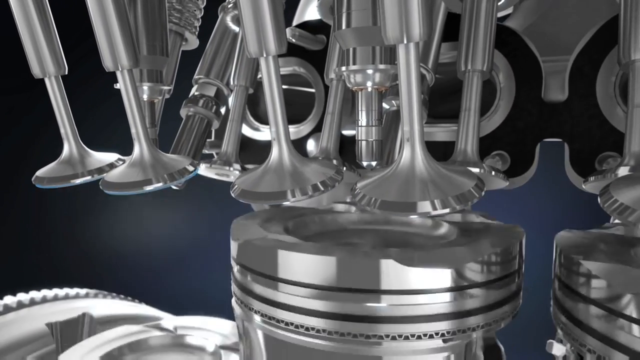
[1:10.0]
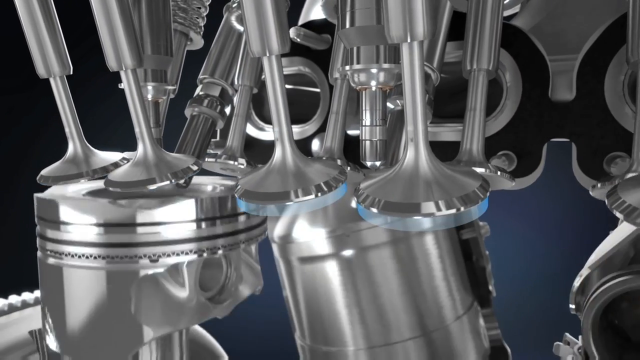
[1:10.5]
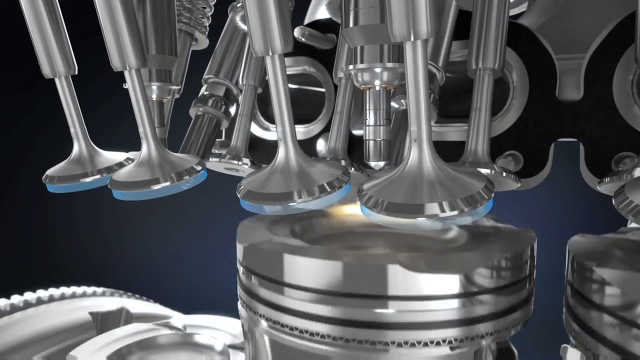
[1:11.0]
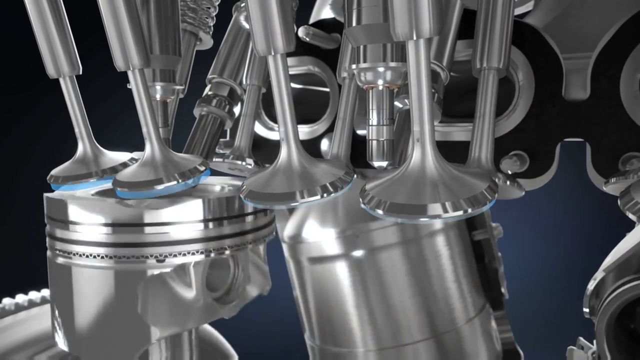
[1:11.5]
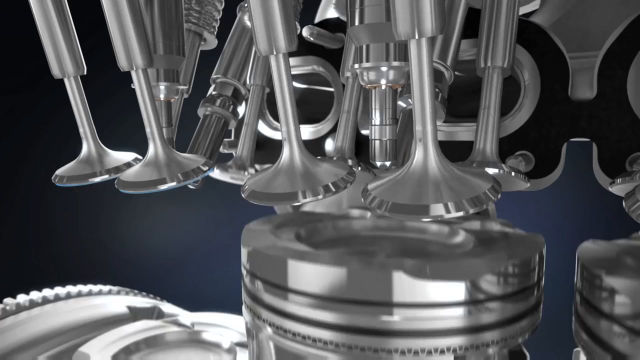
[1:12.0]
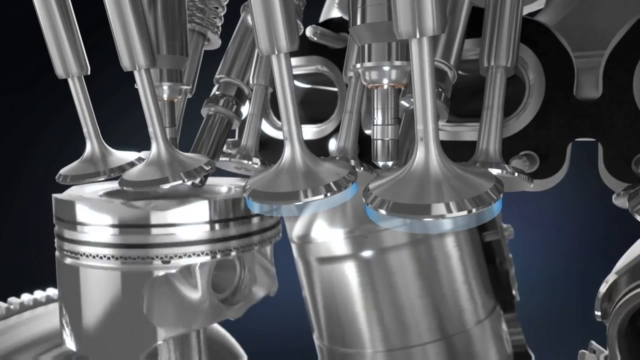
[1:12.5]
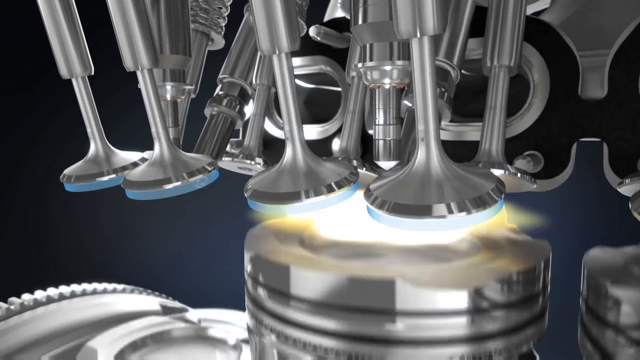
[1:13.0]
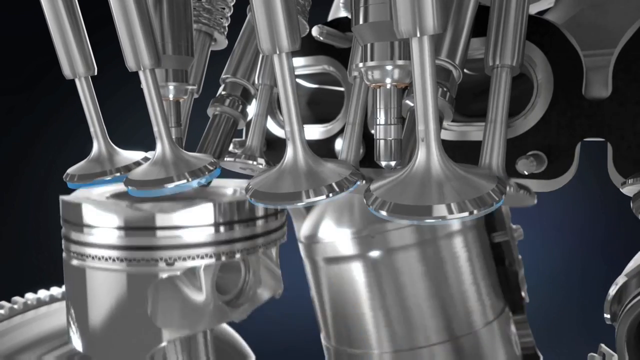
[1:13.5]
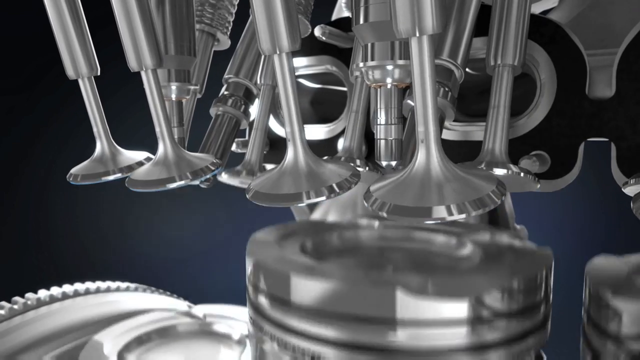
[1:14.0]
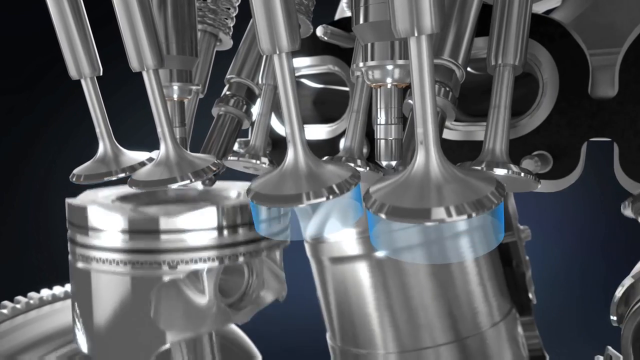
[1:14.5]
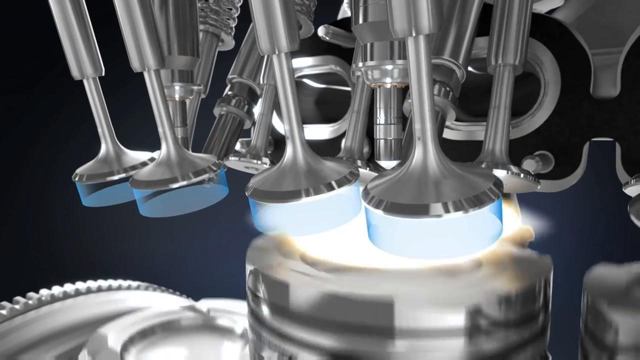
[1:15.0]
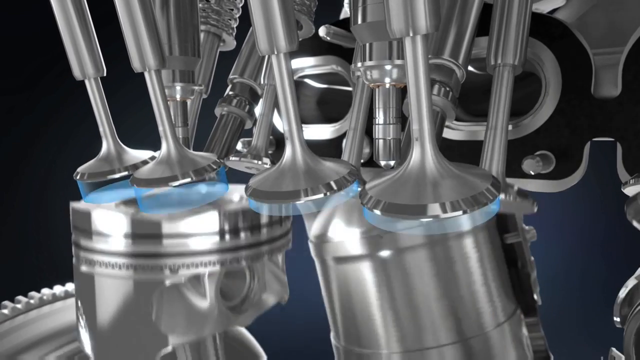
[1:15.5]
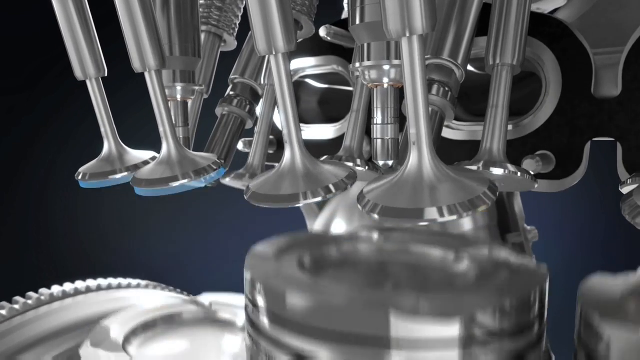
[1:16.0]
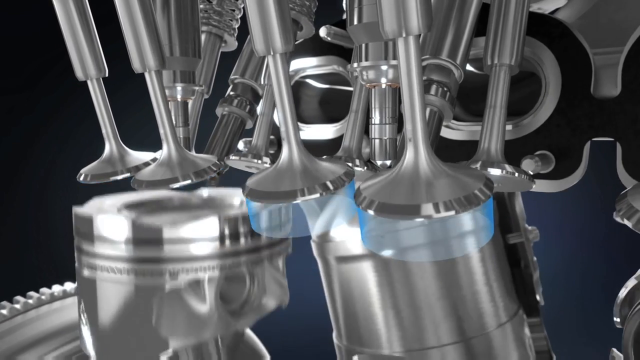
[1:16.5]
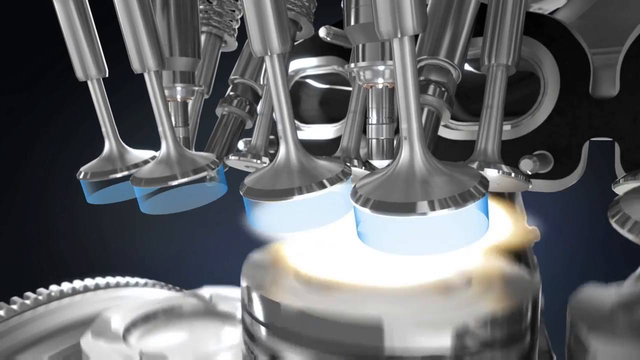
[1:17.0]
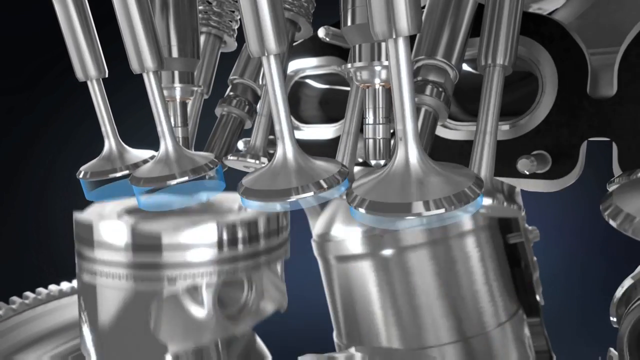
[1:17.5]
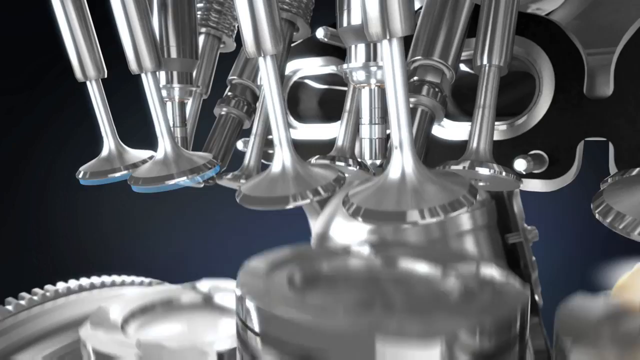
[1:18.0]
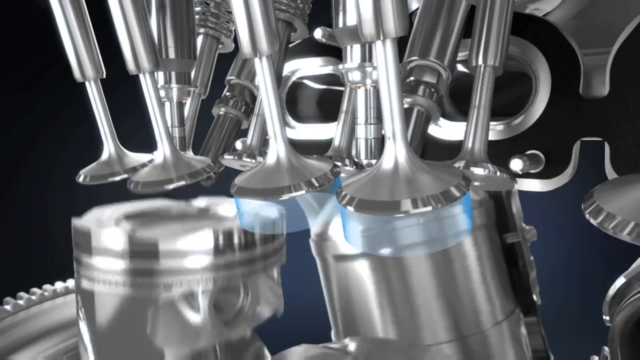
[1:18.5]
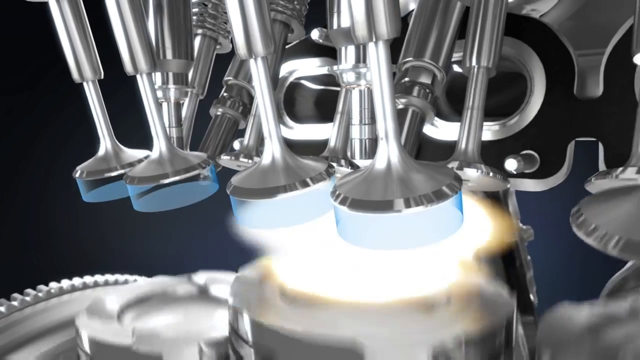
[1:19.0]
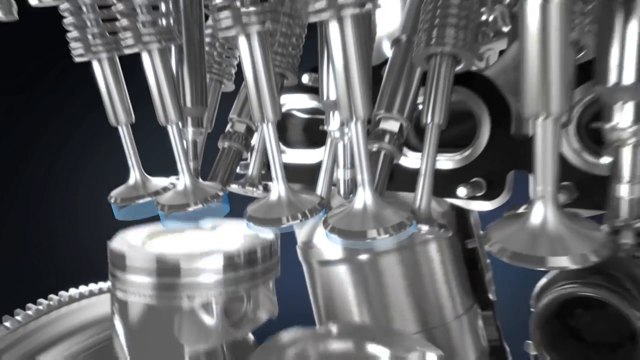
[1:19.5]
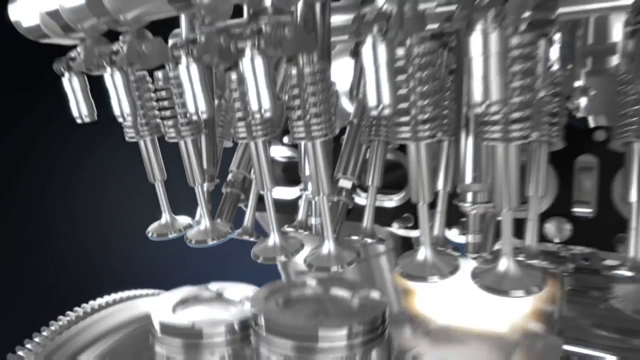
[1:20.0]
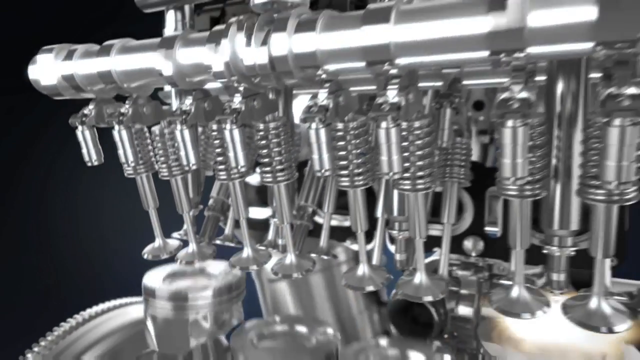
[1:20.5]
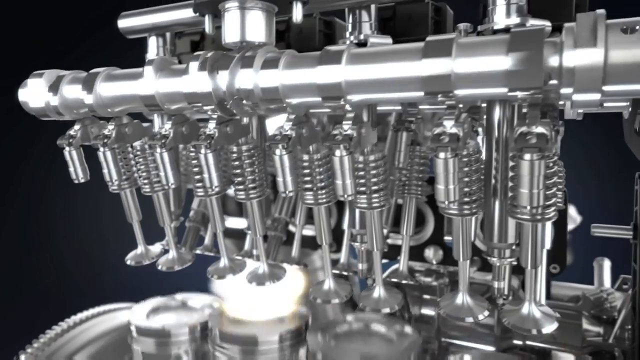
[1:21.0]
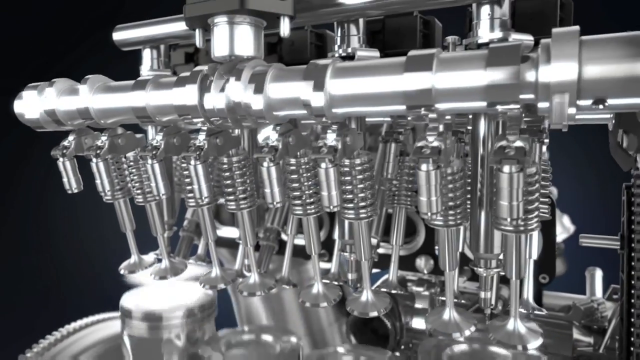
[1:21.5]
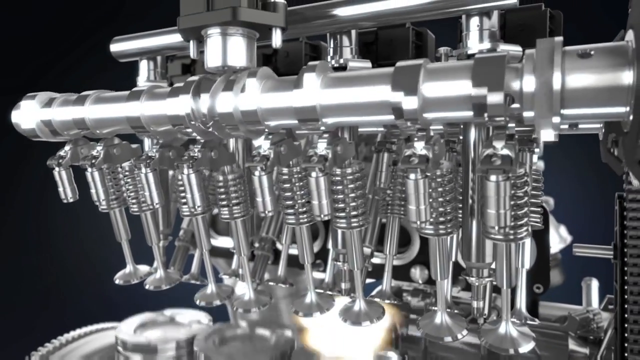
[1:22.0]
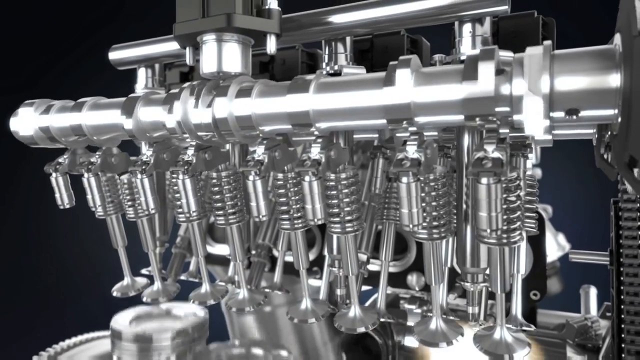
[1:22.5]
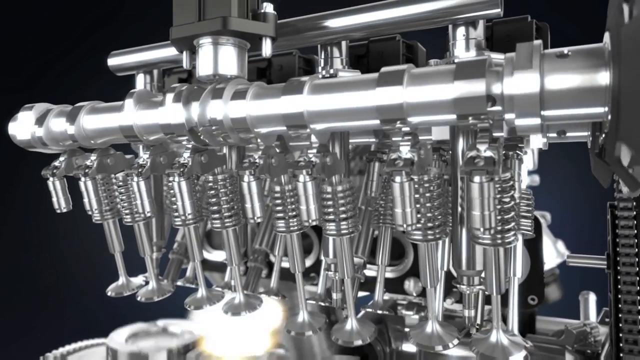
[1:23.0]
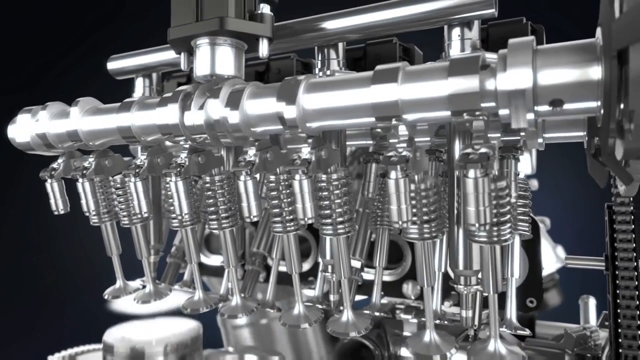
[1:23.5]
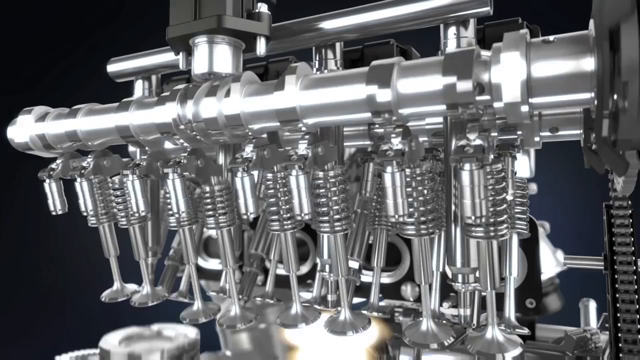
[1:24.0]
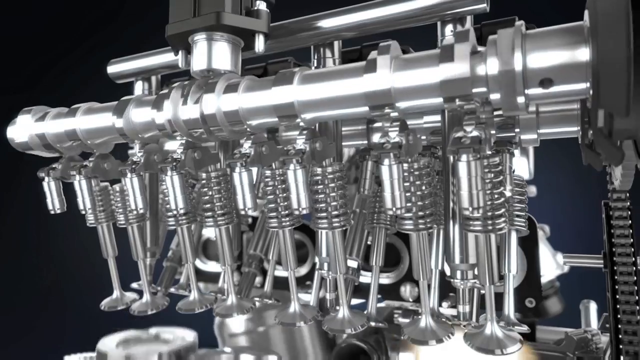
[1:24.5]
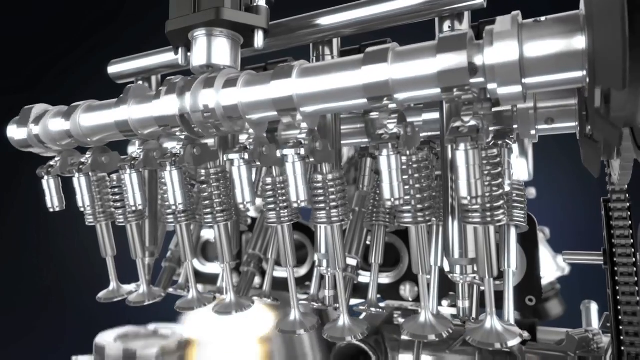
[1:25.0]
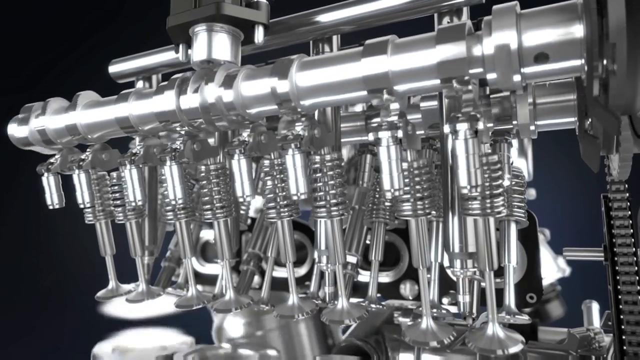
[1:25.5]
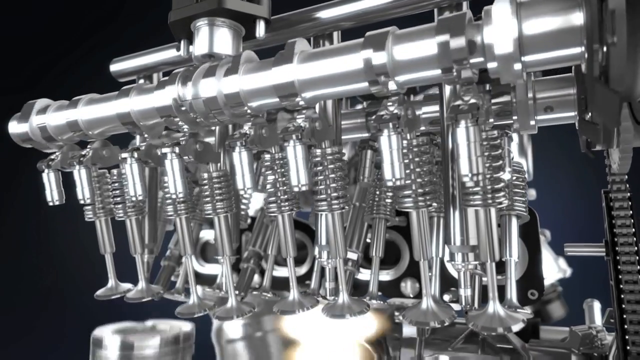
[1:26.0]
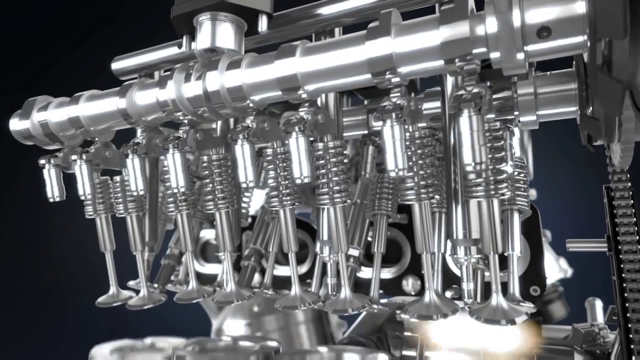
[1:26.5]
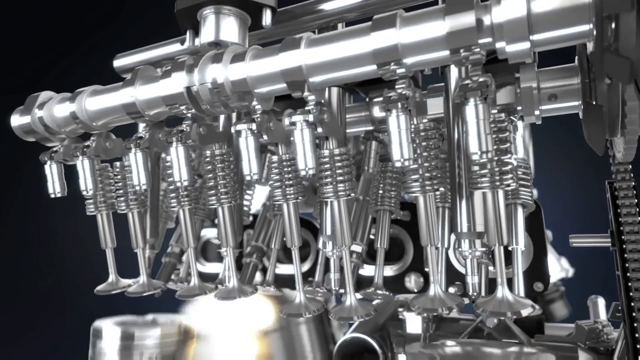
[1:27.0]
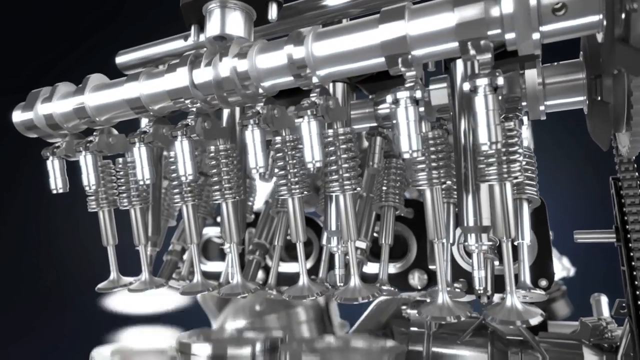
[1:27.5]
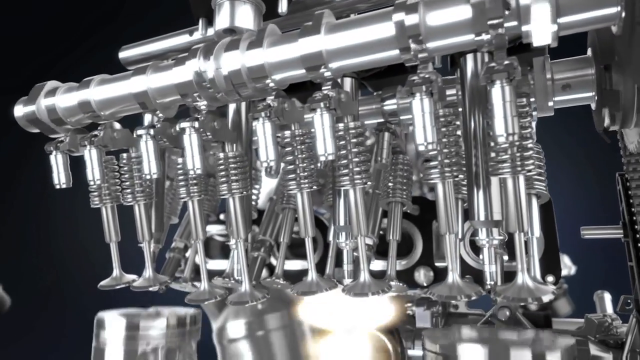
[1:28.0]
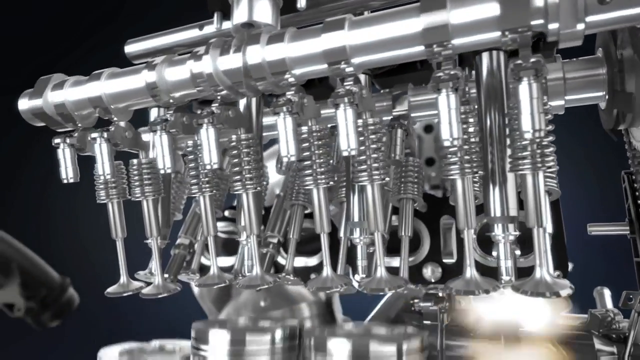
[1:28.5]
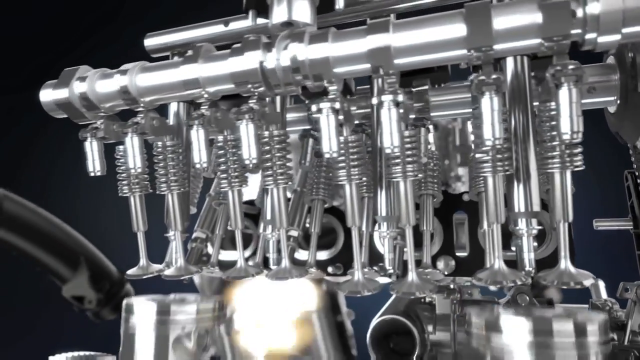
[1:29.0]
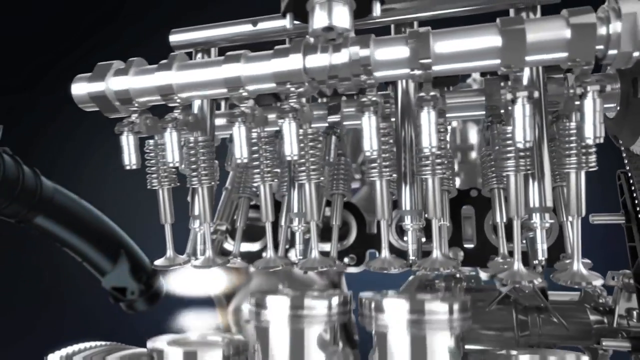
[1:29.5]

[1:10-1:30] Some round, almost trumpet-like devices come out of the upper left part of the screen. Meanwhile, something that is possibly spark plugs moves up and down from the bottom, and something like a blue beam has been digitally added, coming out of them. There is spinning in the top area. The trumpet-like shapes are mostly gray with a little chrome, and the shiniest area looks almost white. In the background are some curls and curved structures that are more or less gray in color.